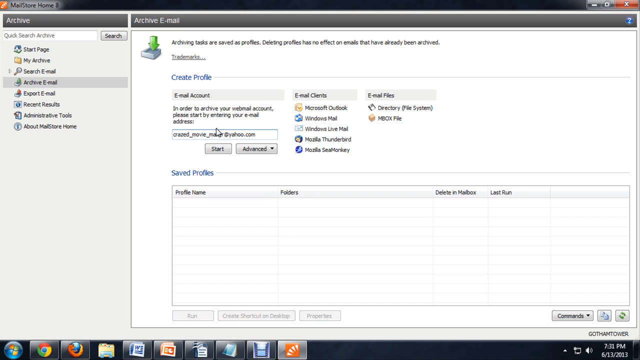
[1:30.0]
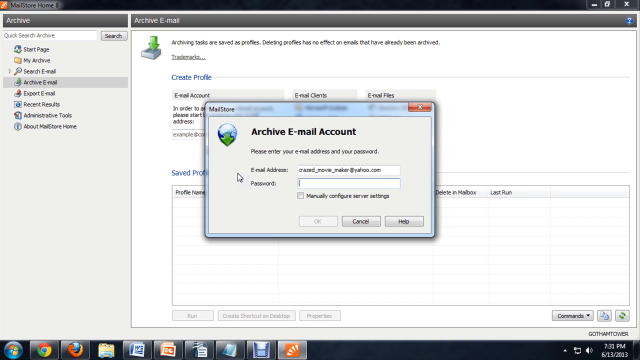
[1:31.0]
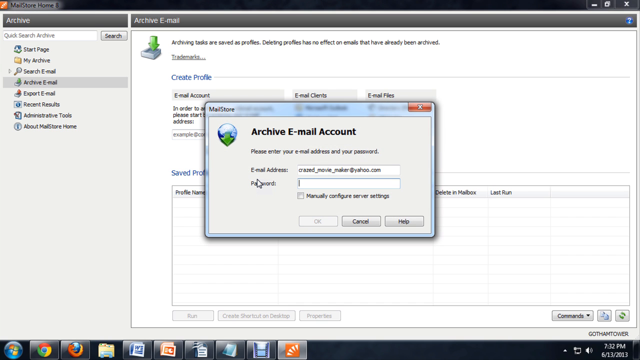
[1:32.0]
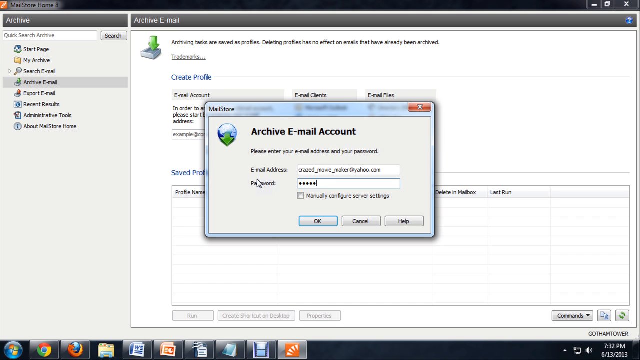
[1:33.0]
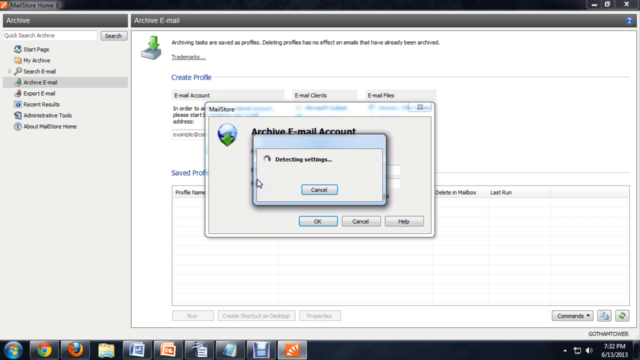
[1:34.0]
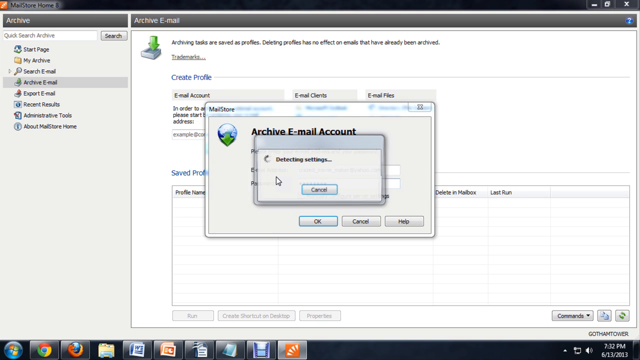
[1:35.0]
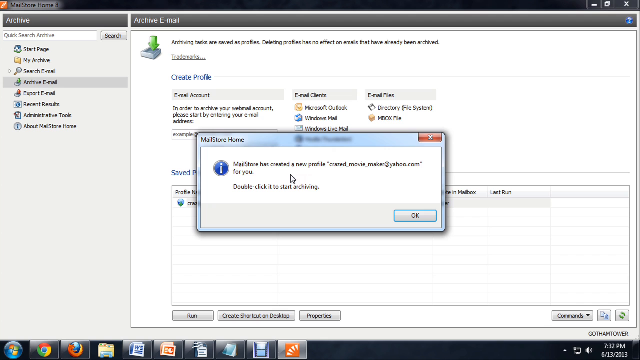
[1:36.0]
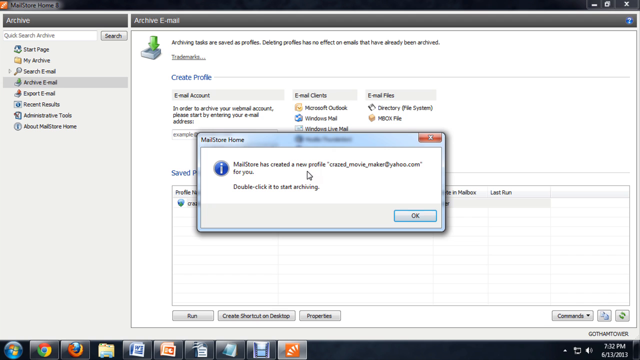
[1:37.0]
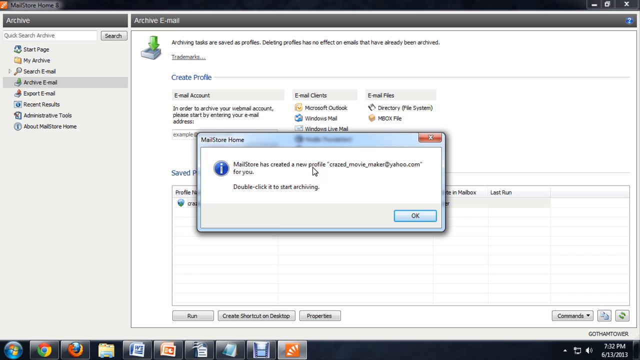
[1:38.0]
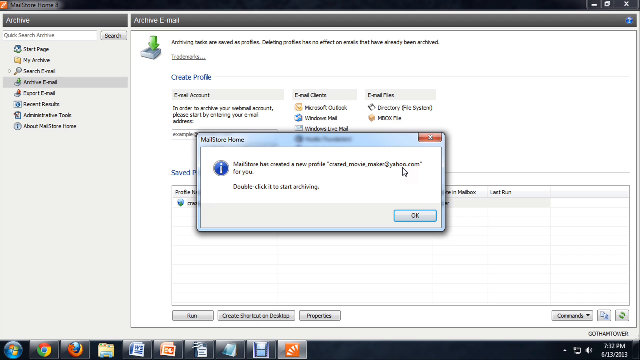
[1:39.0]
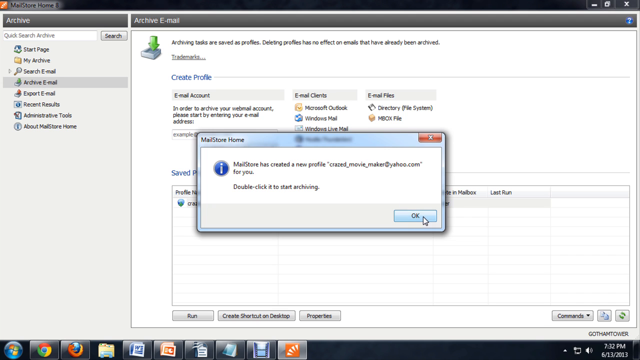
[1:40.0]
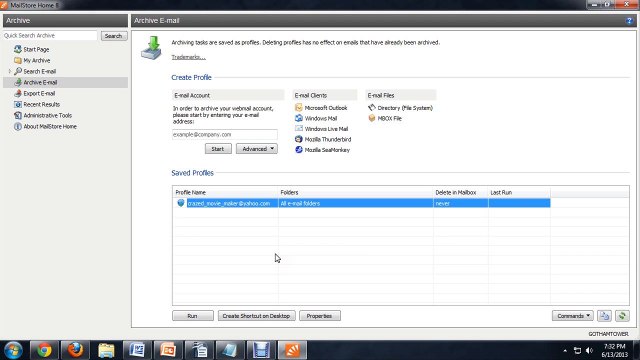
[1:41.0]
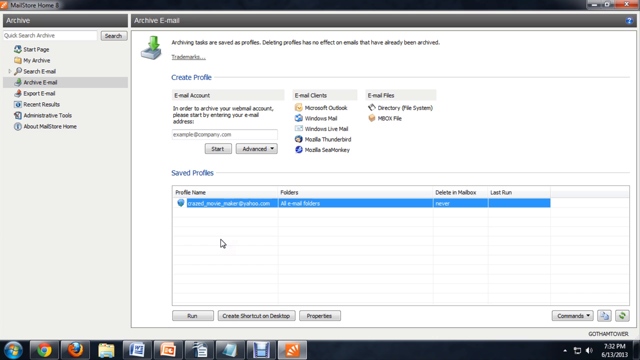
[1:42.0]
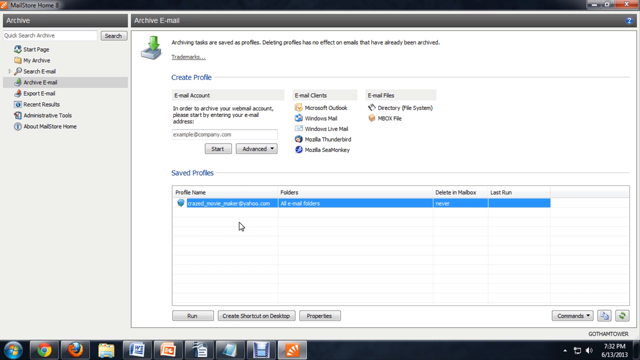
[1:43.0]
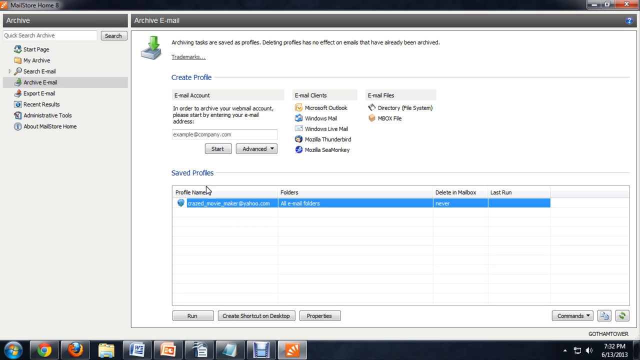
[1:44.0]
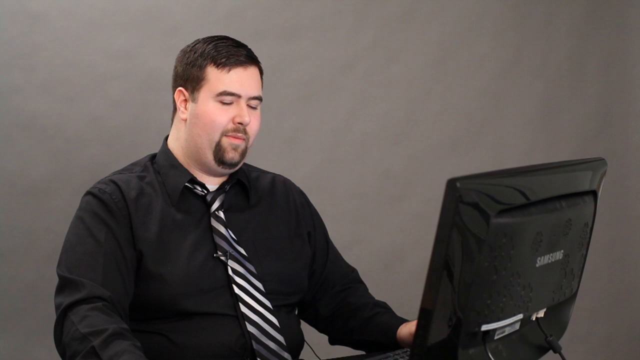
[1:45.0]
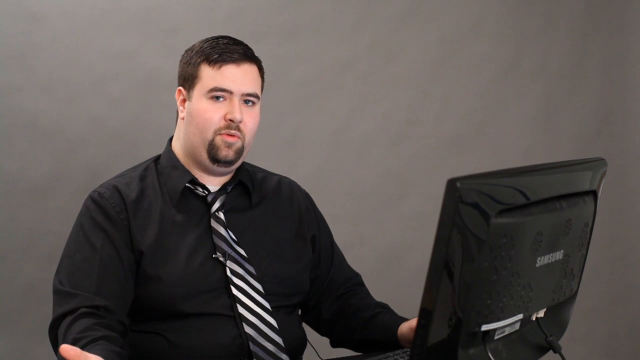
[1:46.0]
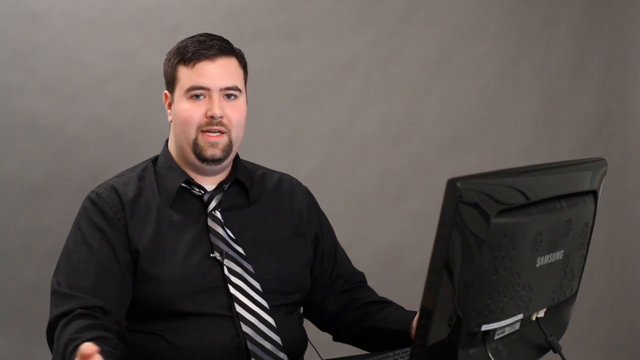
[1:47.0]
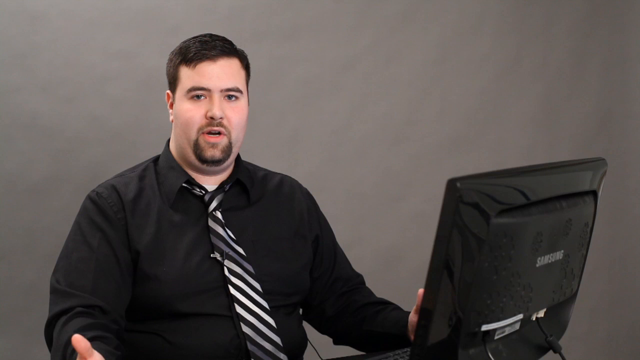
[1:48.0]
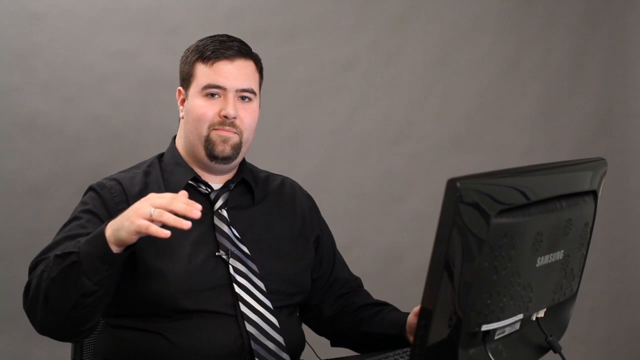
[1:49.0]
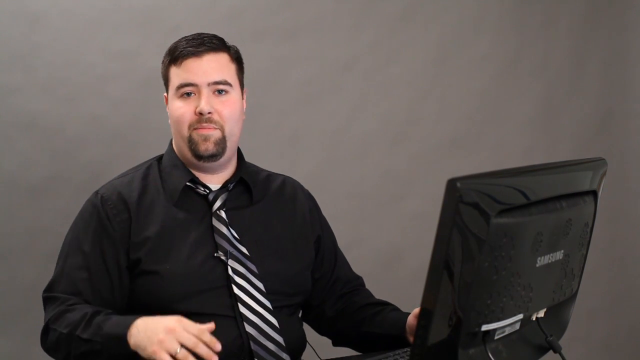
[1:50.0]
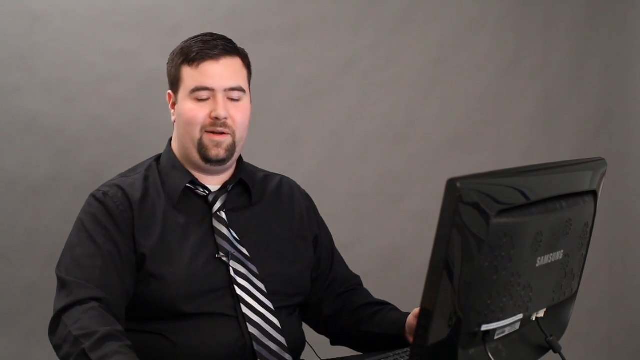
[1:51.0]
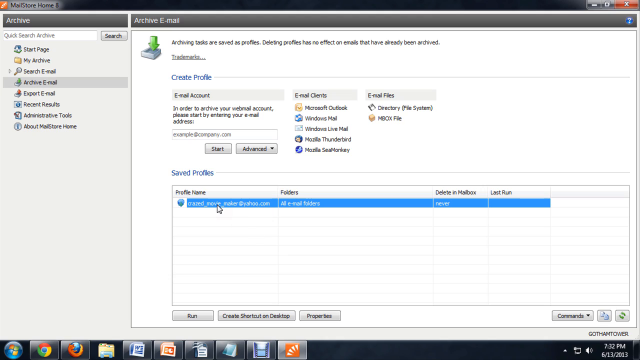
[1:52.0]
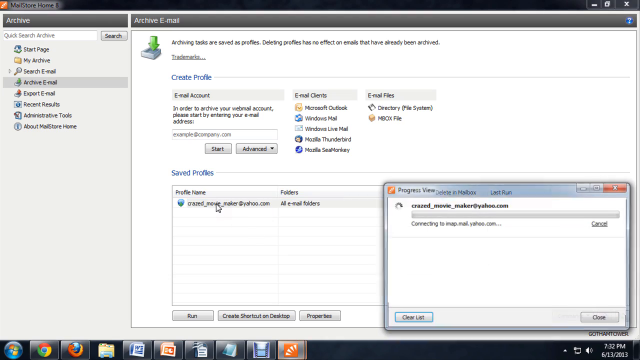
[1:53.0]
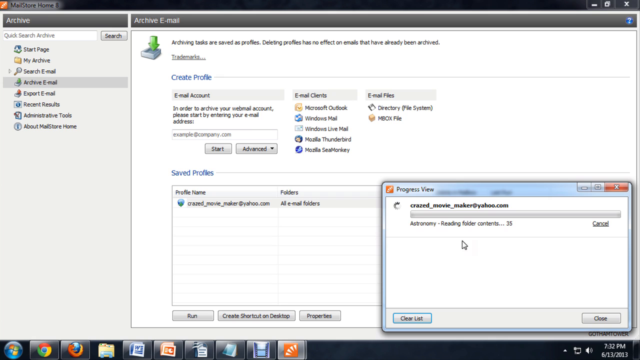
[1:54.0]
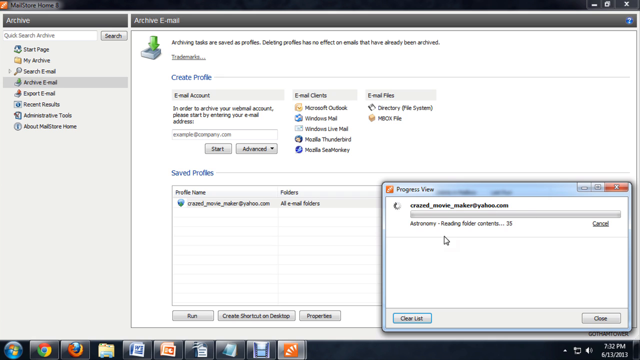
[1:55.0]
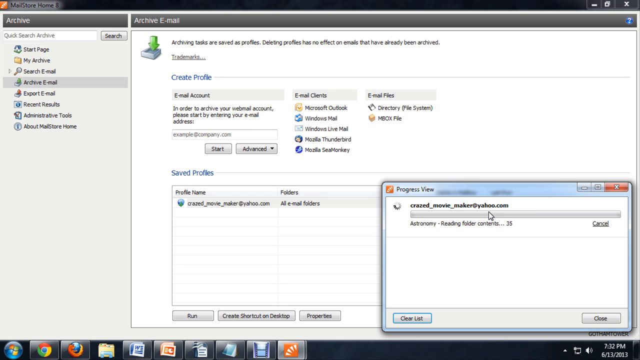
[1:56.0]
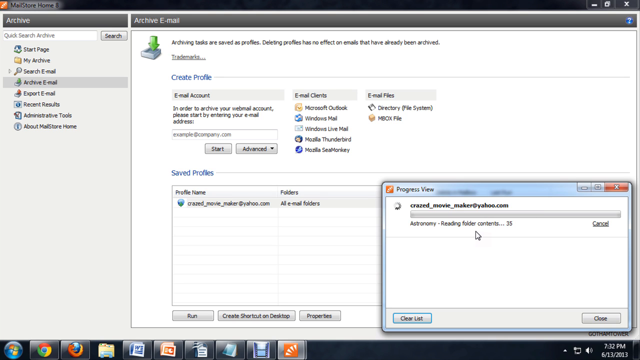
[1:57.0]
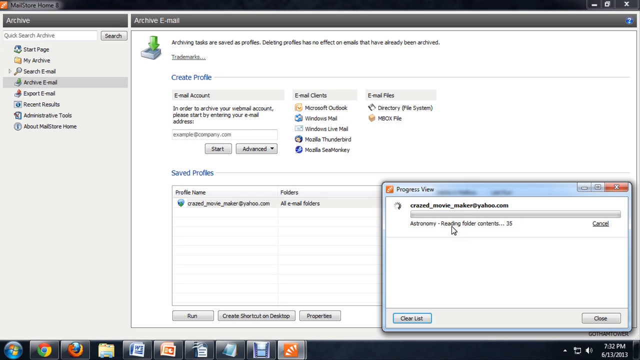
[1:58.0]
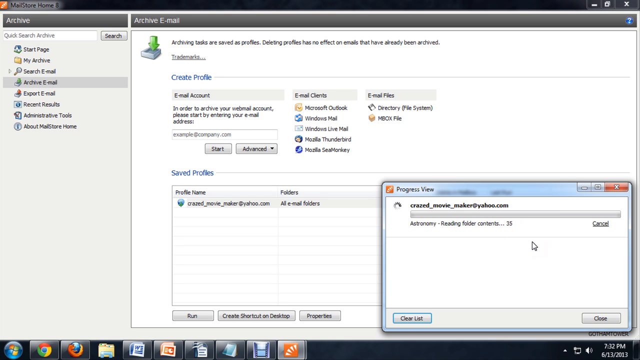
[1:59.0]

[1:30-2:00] On the Archive Email tab, the presenter finishes typing his email account in the Create Profile area and clicks the Start button. Another screen pops up reading "Archive Email Account", with his email address already filled in and a password field. He types his password and apparently clicks Enter, and the app detects the settings. A pop-up box says the new profile has been created and to double-click to start archiving. He clicks OK, and his profile now appears in the saved profiles area, with options below to run, create shortcuts to the desktop, open properties, or open commands. He hovers over it to show it has been created. The video returns to him talking, seemingly explaining the process he just went through, and then goes back to the new profile. He double-clicks it, a progress bar appears and reaches 3%, and then it kind of stops.